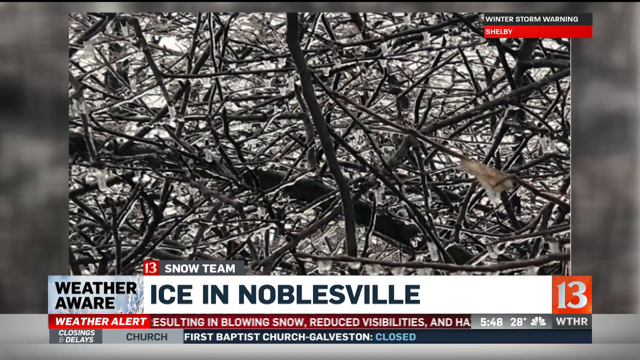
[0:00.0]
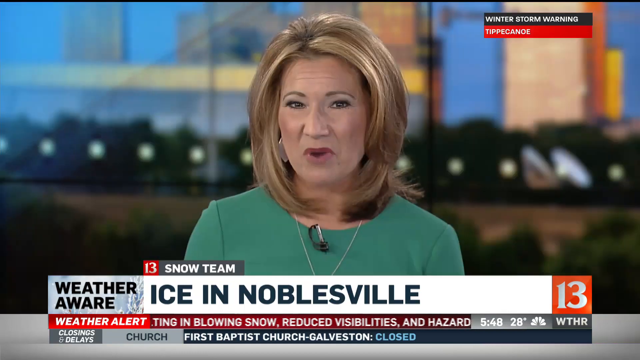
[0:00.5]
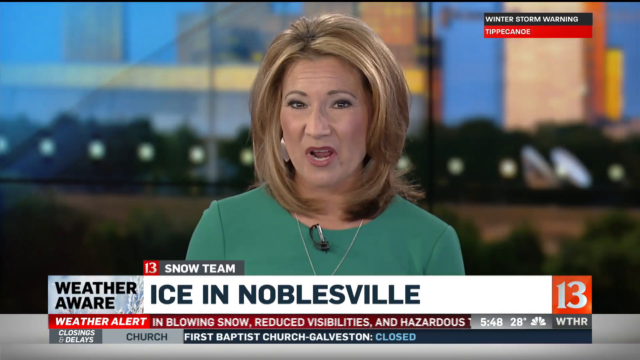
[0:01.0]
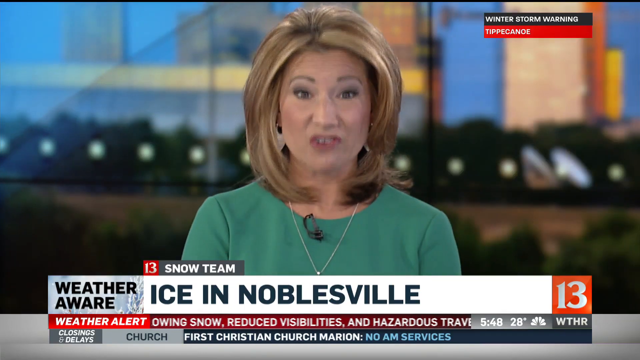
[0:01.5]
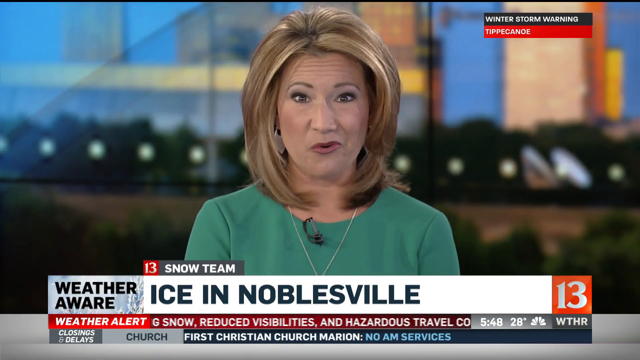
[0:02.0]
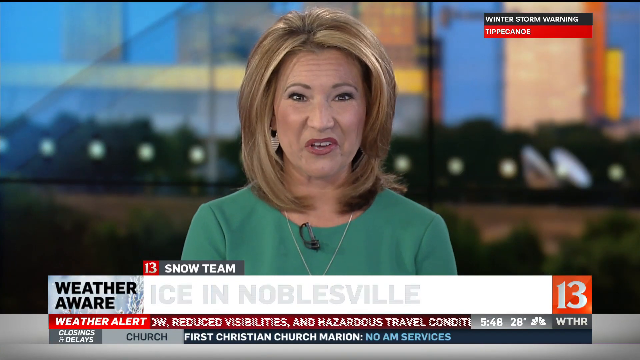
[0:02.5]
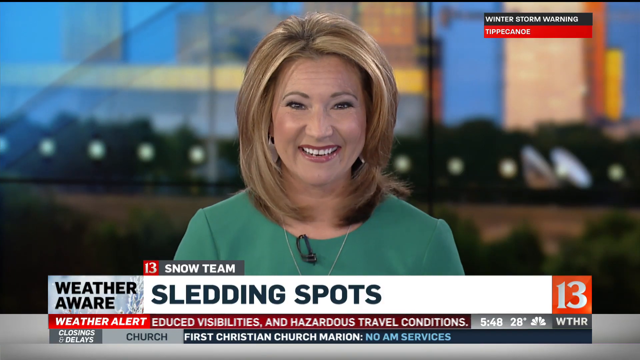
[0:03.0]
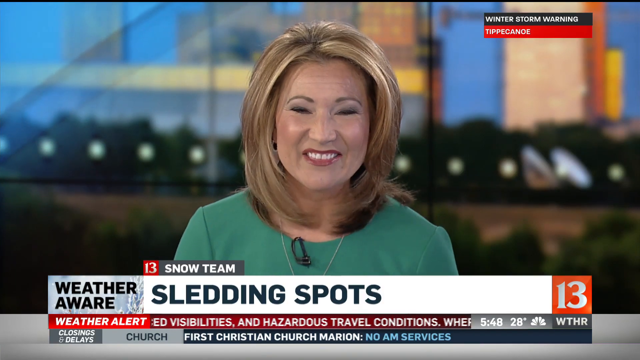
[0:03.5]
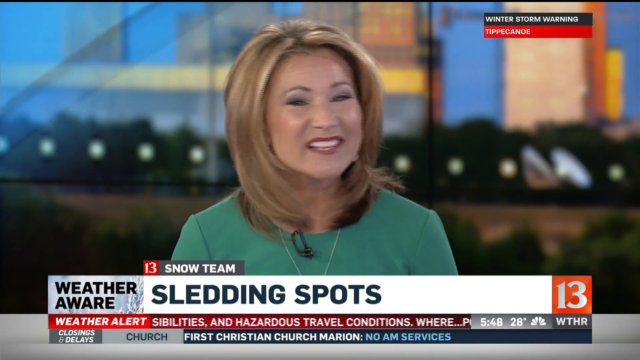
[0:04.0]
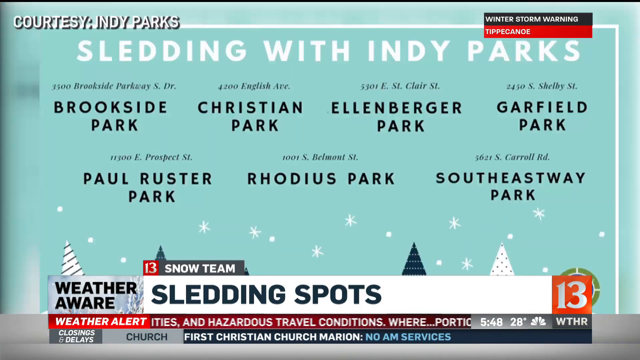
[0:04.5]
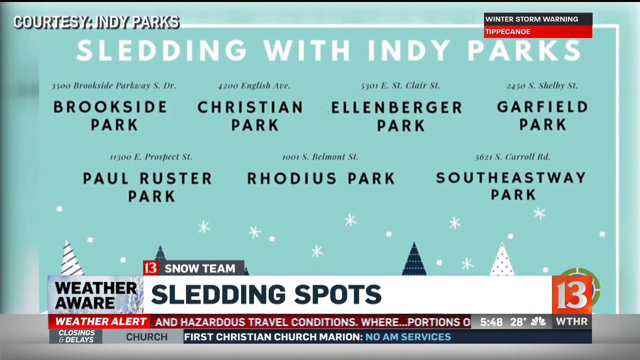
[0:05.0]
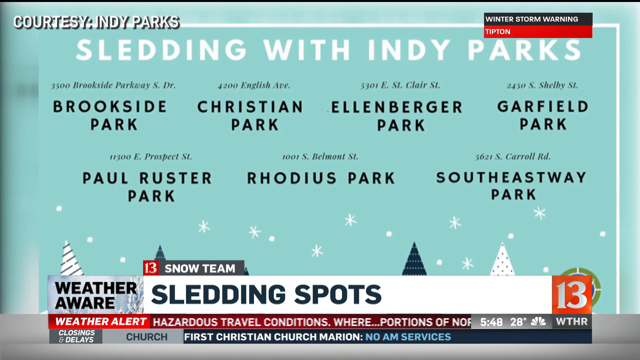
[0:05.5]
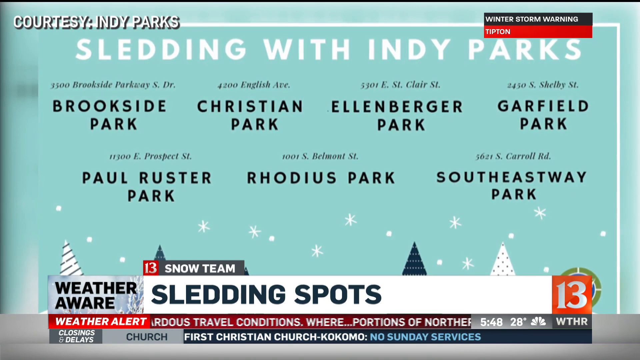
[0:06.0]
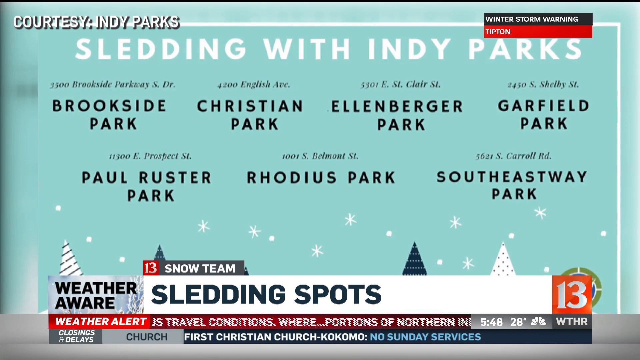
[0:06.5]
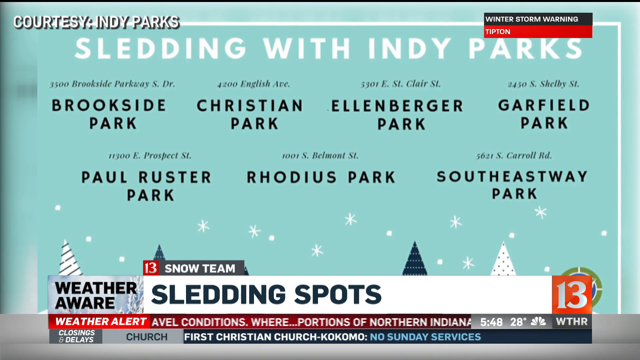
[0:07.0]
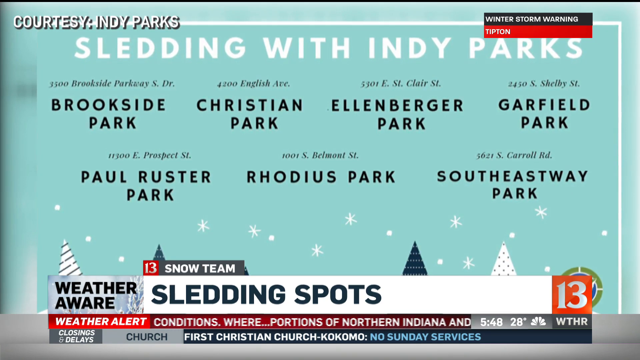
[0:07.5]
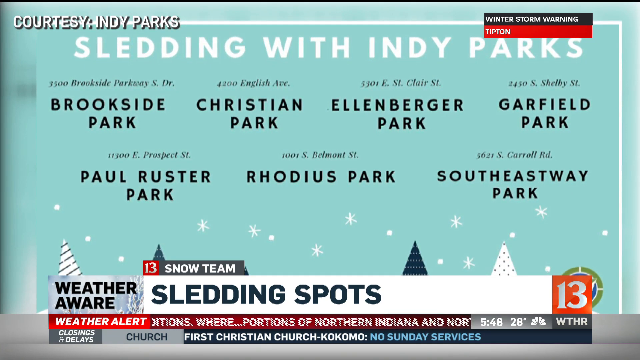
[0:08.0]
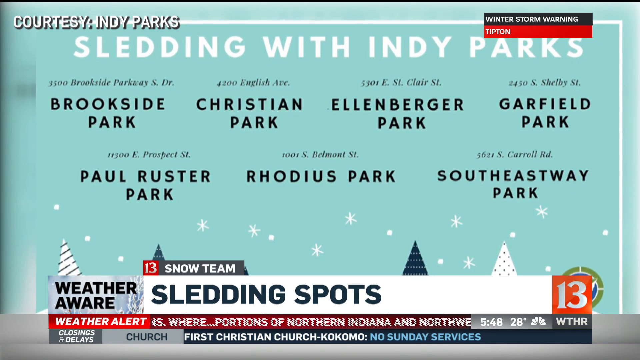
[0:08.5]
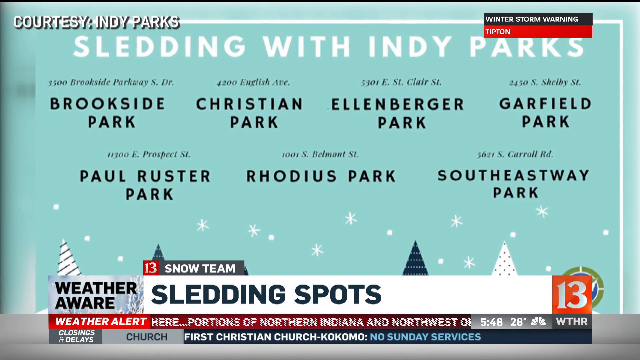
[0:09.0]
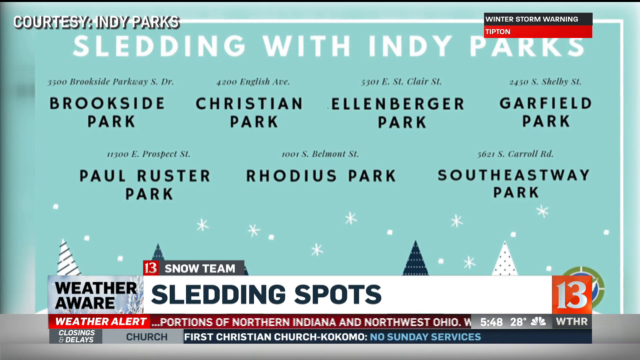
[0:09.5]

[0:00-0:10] The broadcast is from channel 13, WTHR. The time shown is 5:48 and it is 28 degrees. It looks like a ton of ice or snow is coming in. The shot switches back to the anchor, who has a long bobbed haircut and a very excited expression, as sledding spots in the following parks are listed: Brookside Park, Christian Park, Eldenburg Park, Garfield Park, Roster Park, Rhododis Park and Southeastway Park. The header reads "sledding with Indy Parks," suggesting the location is Indiana. The screen also shows a winter storm warning, flipping through different places in the area that should be watching for snow.